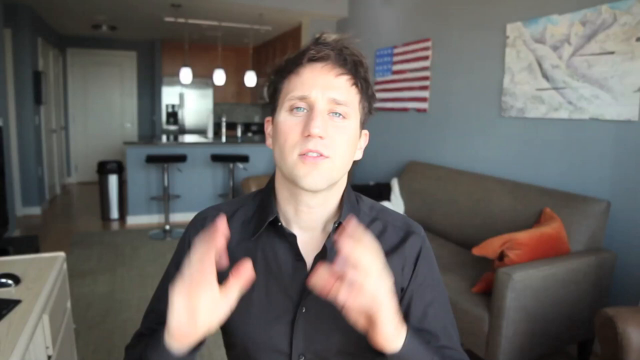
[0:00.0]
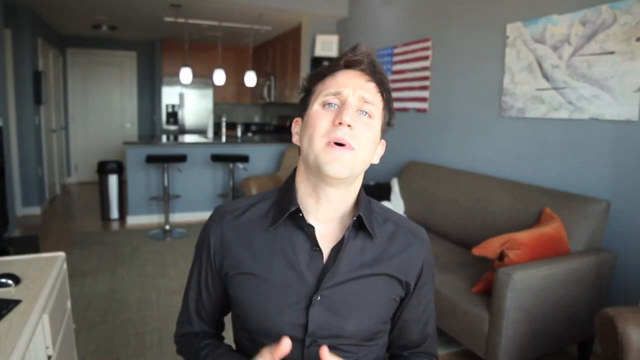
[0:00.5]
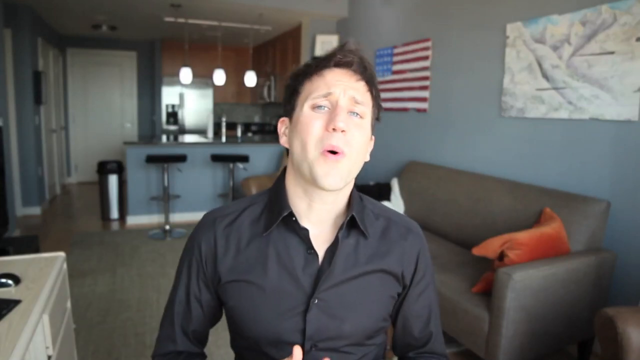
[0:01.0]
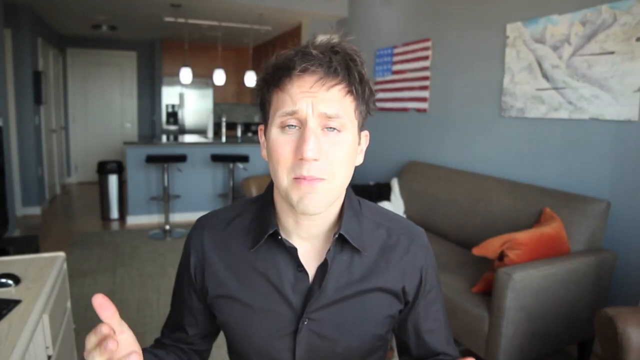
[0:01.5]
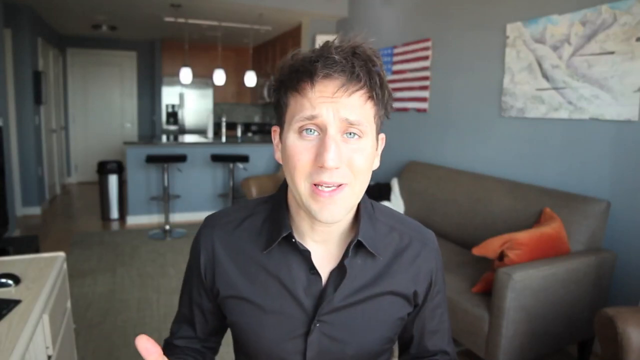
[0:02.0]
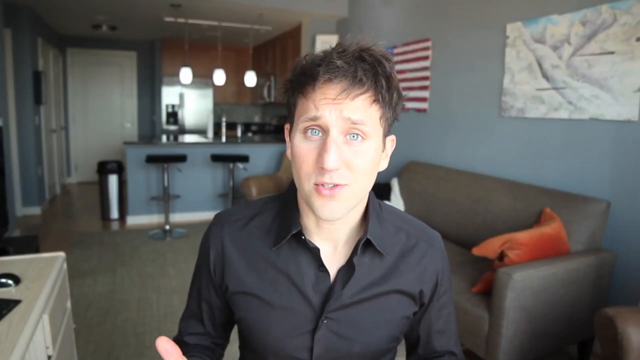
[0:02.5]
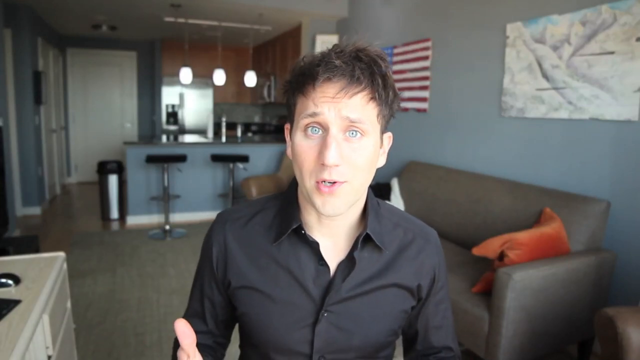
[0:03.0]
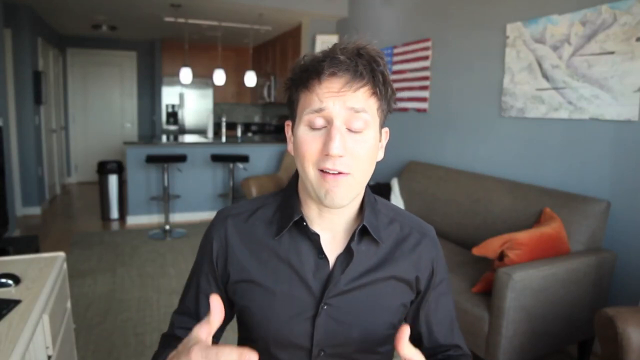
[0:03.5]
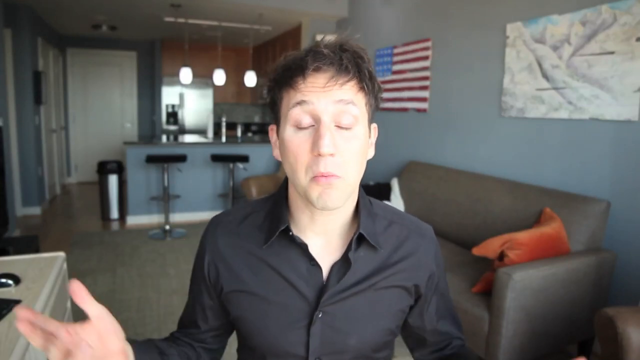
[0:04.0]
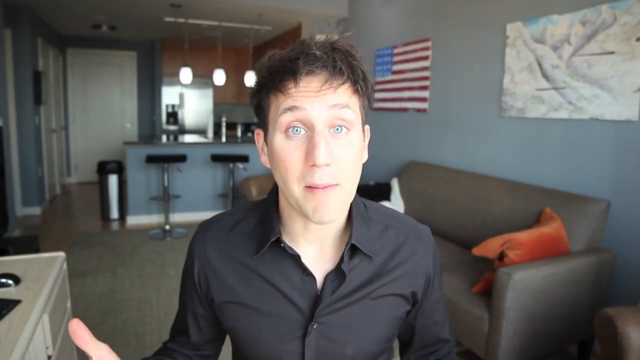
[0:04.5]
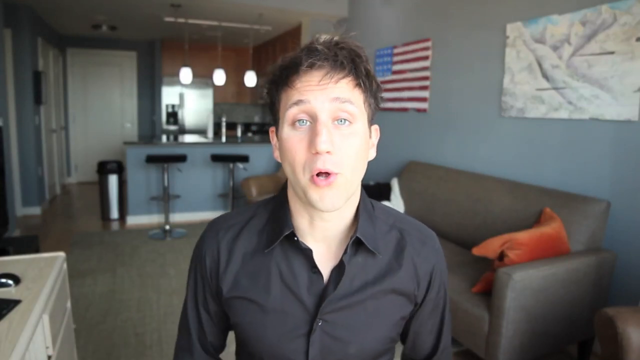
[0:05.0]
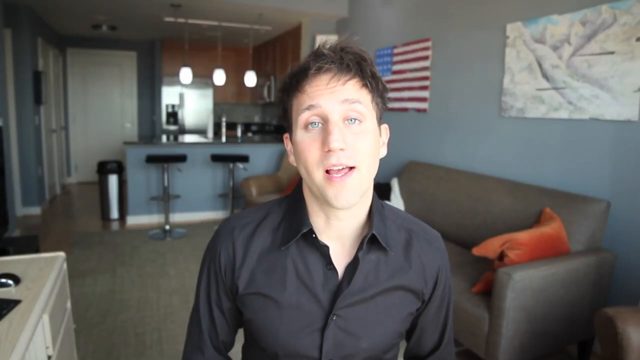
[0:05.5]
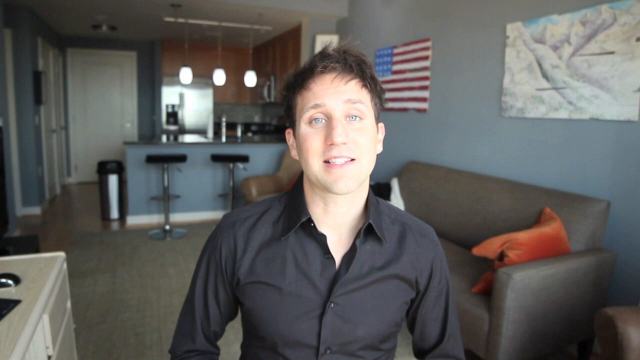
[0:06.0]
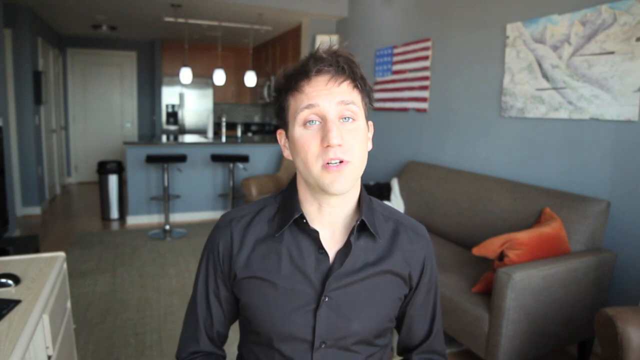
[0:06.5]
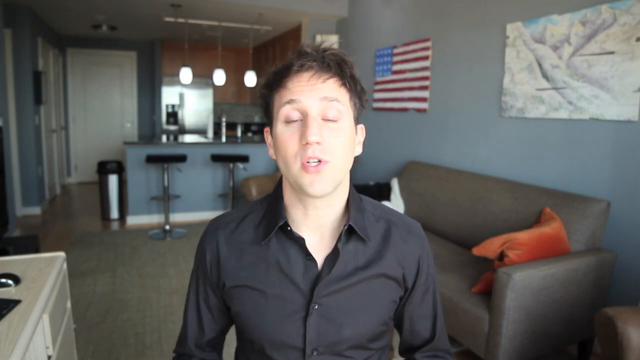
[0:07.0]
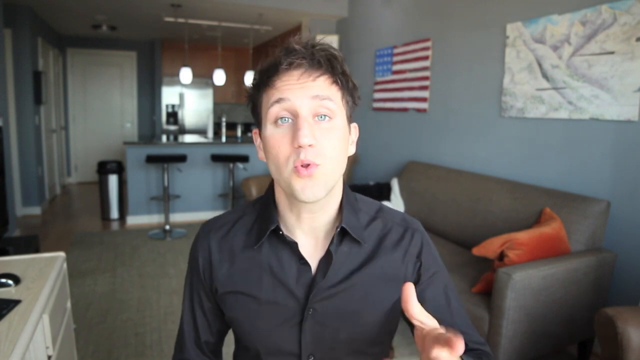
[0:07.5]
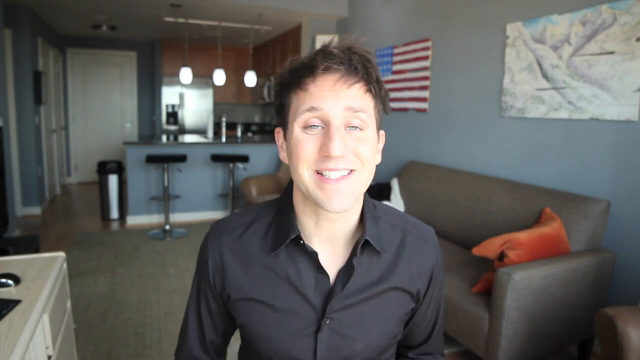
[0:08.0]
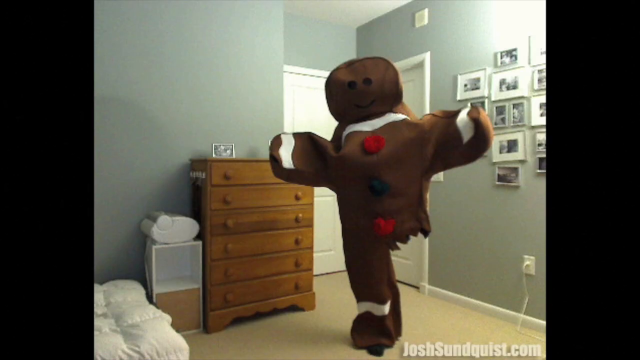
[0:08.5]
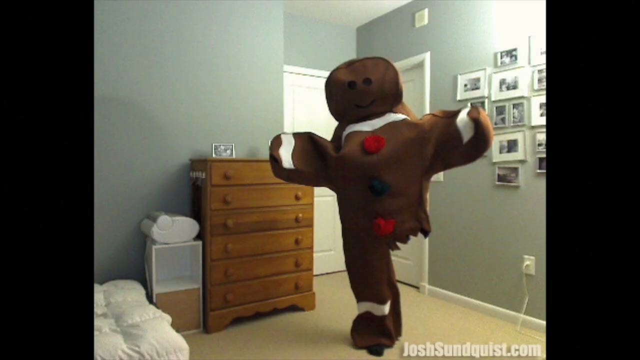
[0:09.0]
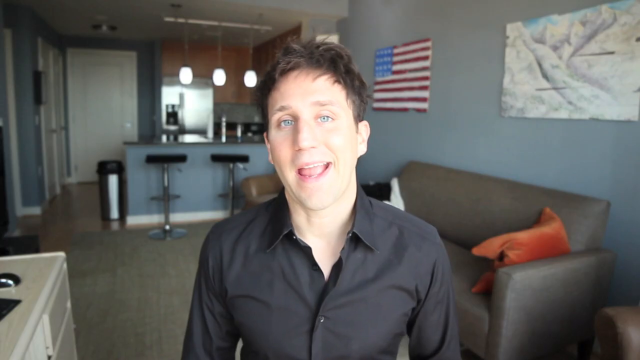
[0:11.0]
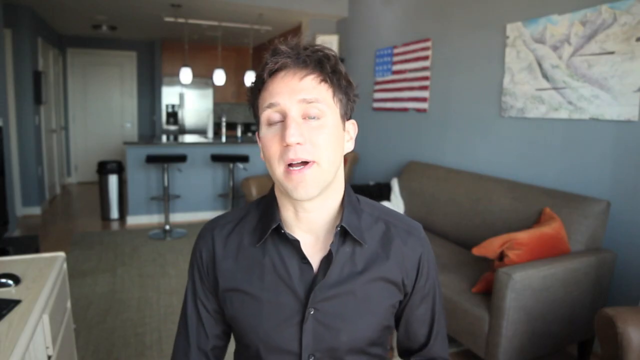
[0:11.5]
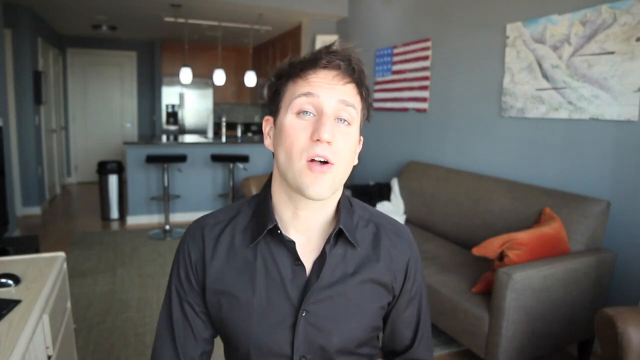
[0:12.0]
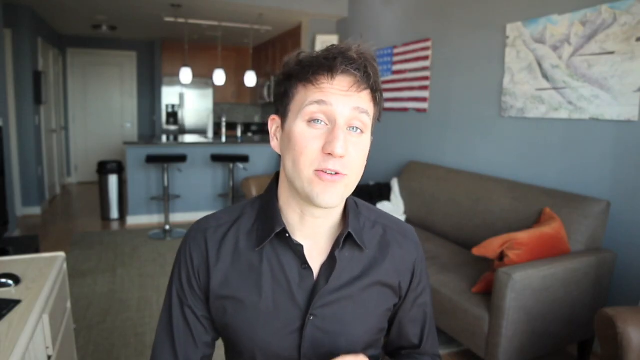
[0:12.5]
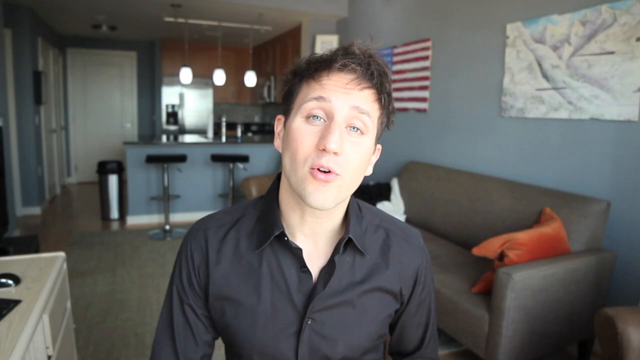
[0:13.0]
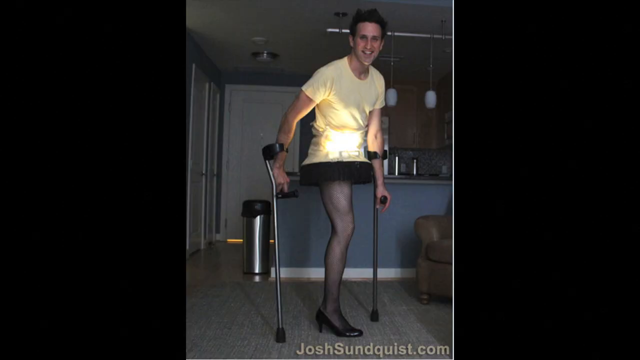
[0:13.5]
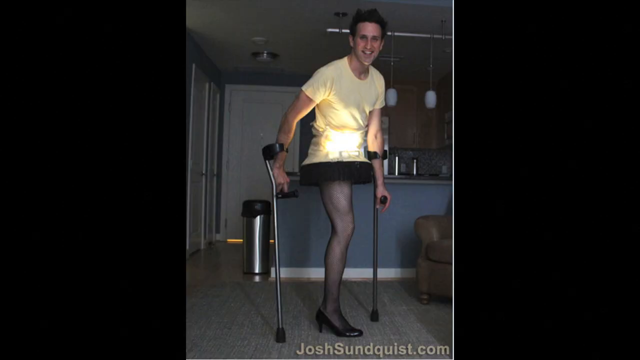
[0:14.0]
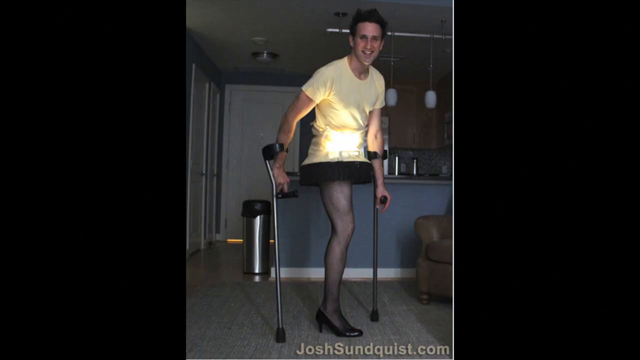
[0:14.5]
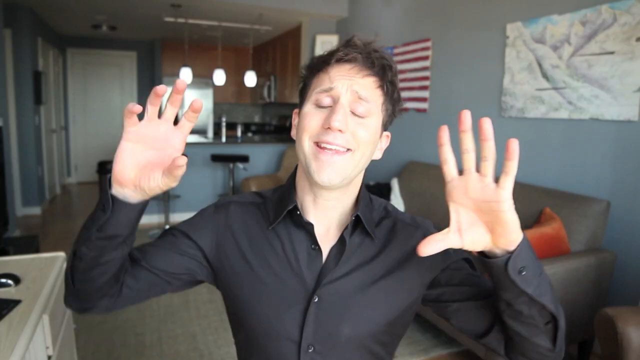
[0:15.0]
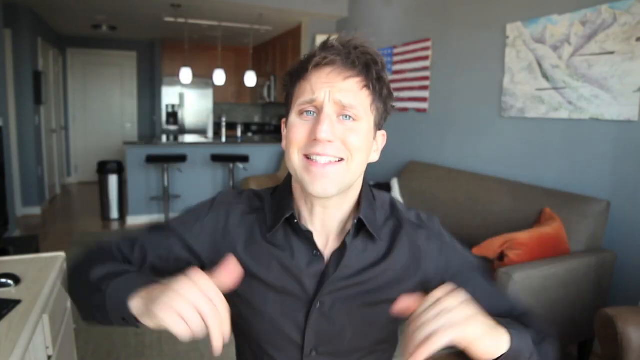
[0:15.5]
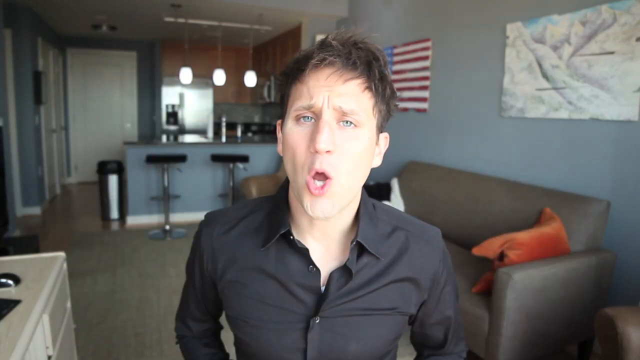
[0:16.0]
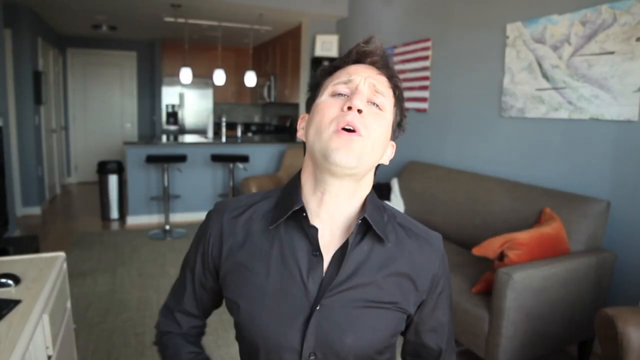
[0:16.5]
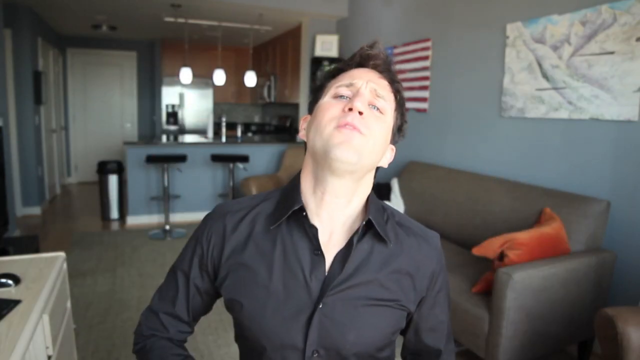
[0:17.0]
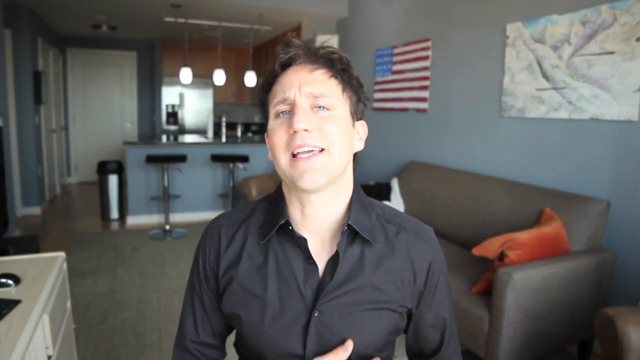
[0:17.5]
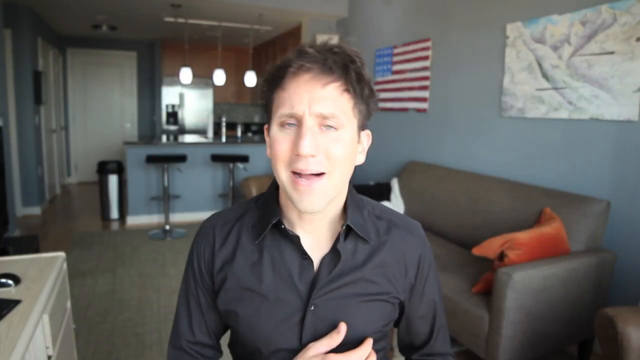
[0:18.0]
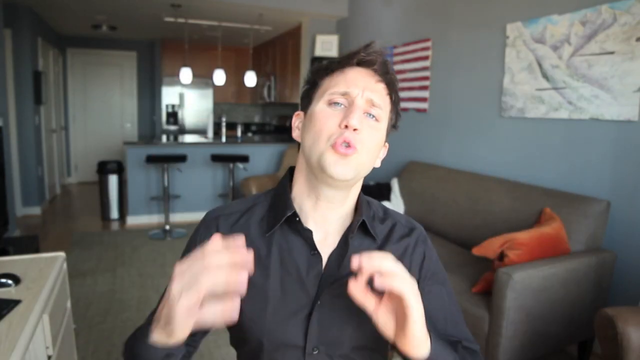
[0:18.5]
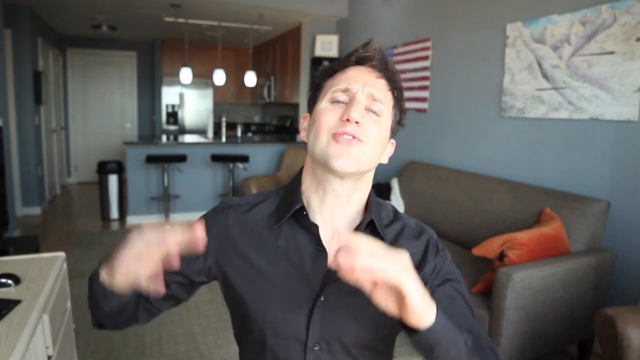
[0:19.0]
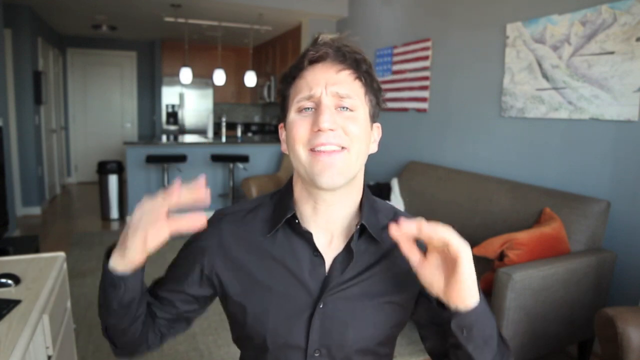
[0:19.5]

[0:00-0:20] A man in a black shirt sits in a living room, facing the camera and talking while gesturing with his hands. Behind him are a kitchen area with bar stools and a couch with a pillow, and there is an American flag and some artwork on the wall. The video suddenly cuts to the man in a large gingerbread man costume, standing in a room and moving its arms; the costume appears to have one leg bitten off, or shows only one leg, with the other looking as if it was bitten off. The video then cuts back to the man in the black shirt in the living room, still using hand gestures as he speaks.